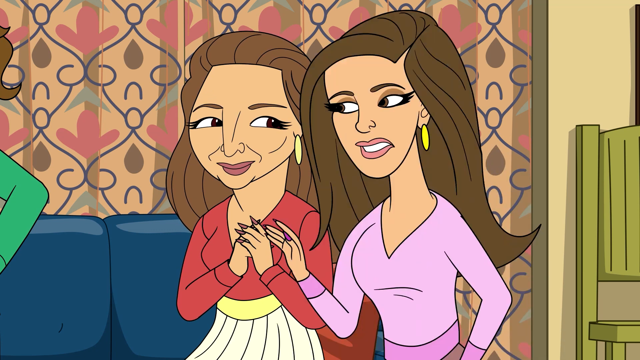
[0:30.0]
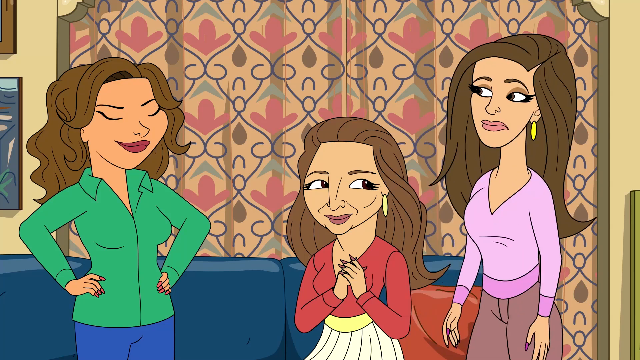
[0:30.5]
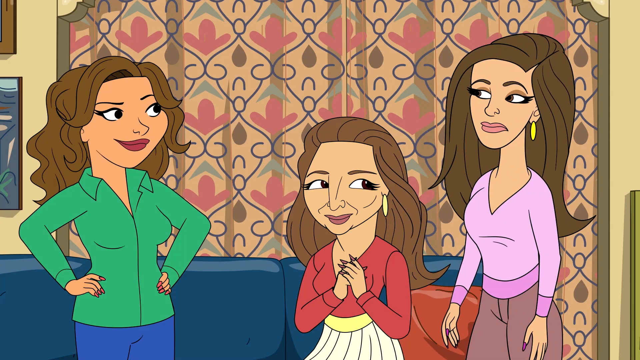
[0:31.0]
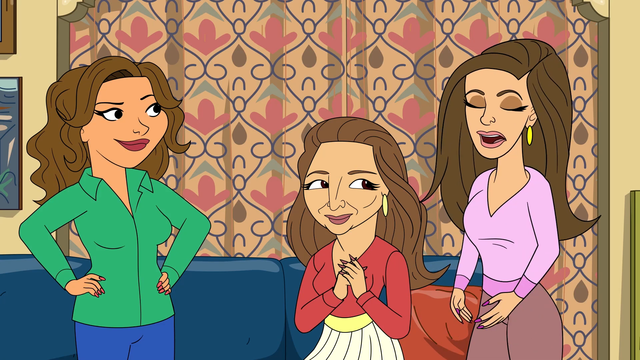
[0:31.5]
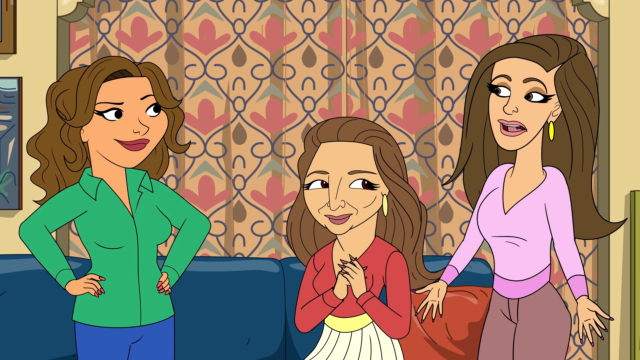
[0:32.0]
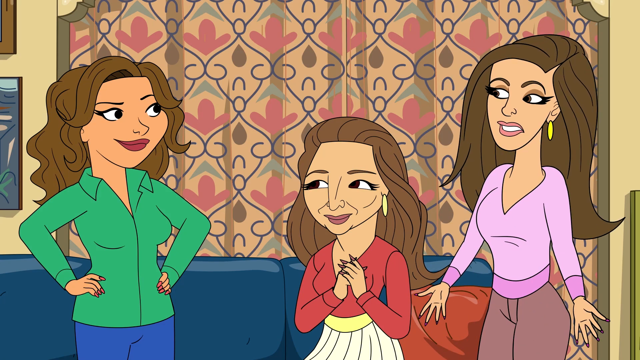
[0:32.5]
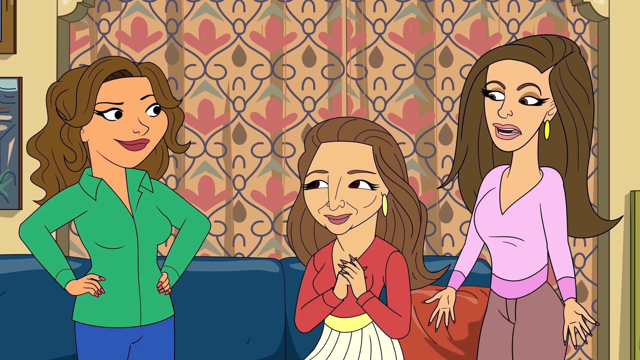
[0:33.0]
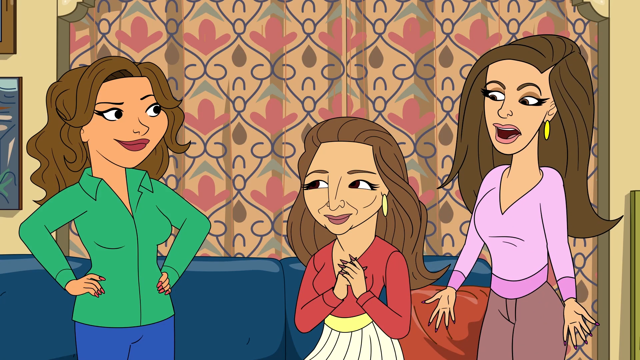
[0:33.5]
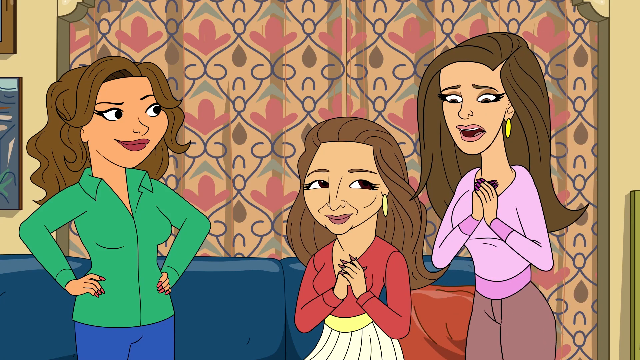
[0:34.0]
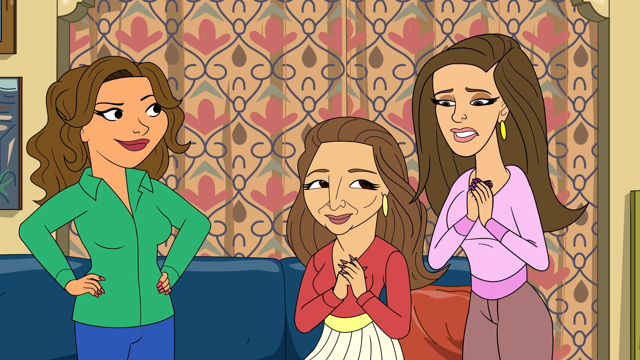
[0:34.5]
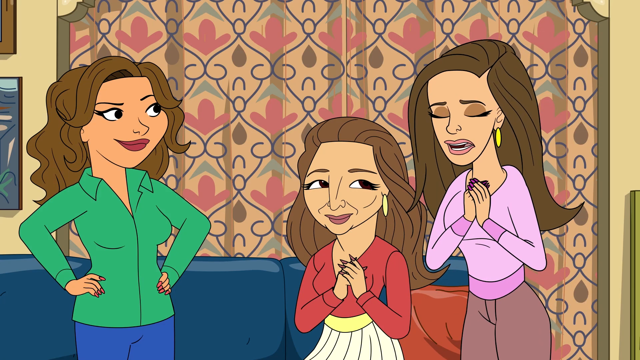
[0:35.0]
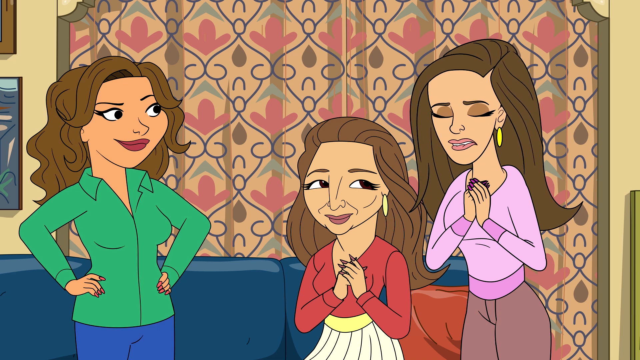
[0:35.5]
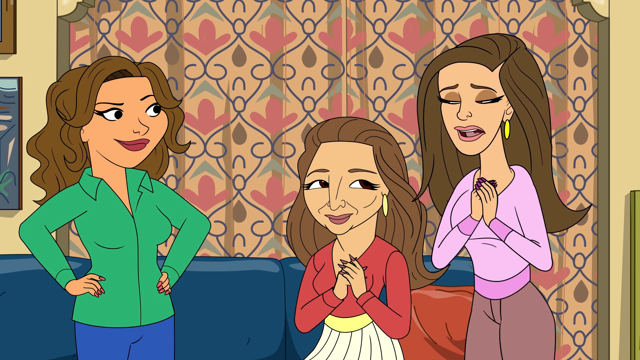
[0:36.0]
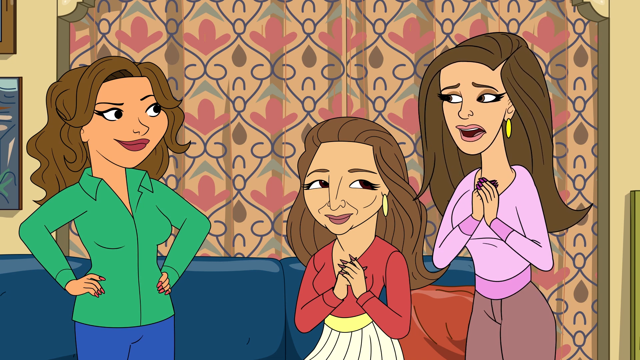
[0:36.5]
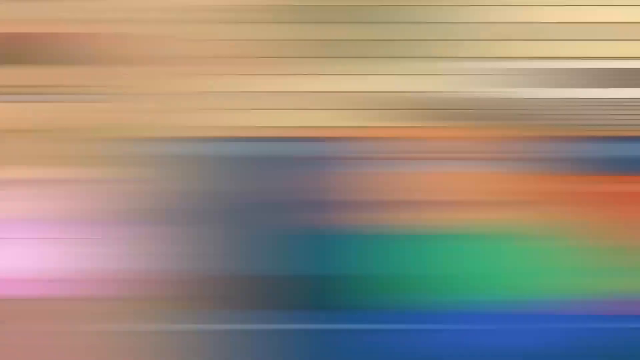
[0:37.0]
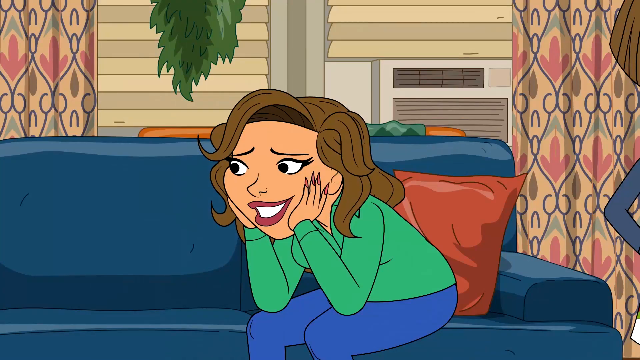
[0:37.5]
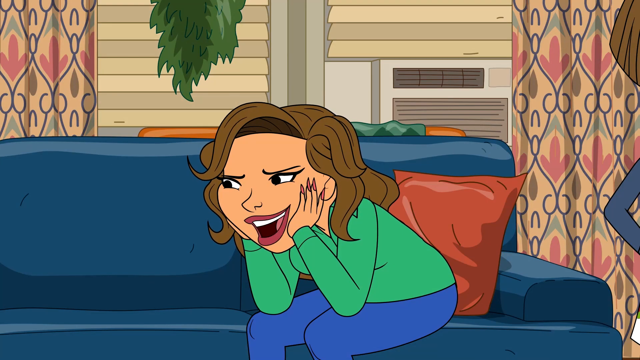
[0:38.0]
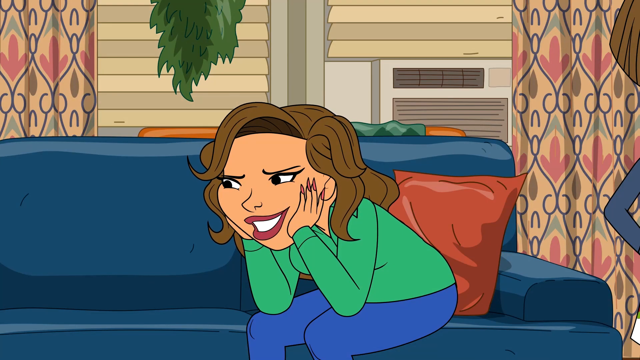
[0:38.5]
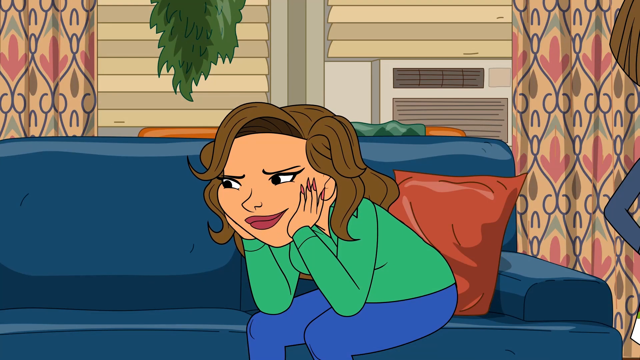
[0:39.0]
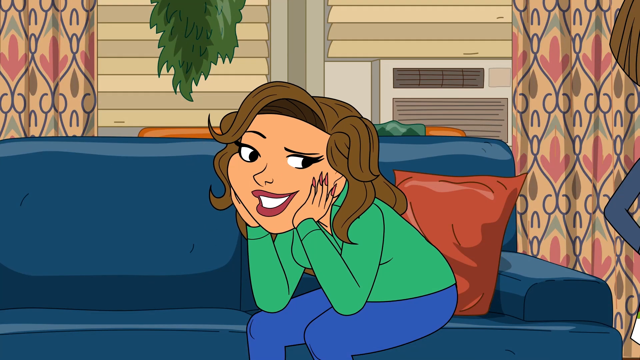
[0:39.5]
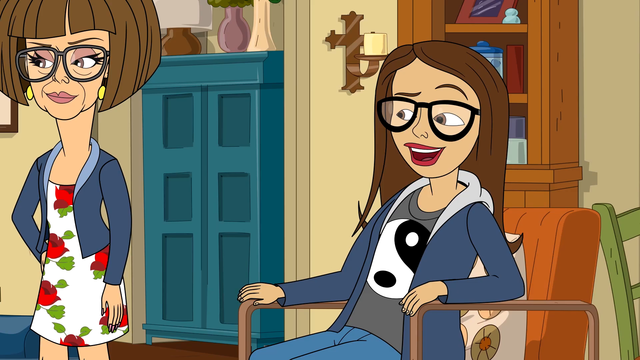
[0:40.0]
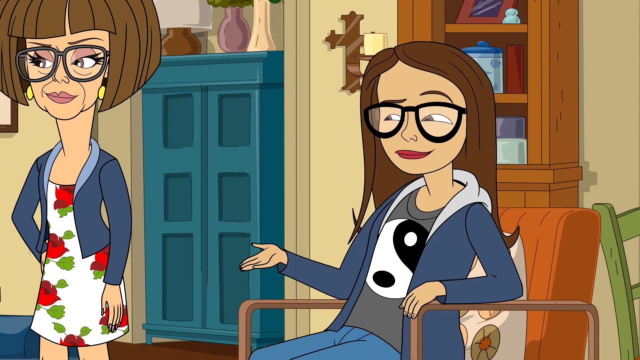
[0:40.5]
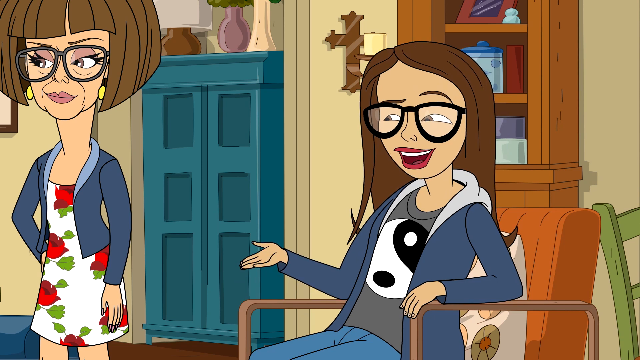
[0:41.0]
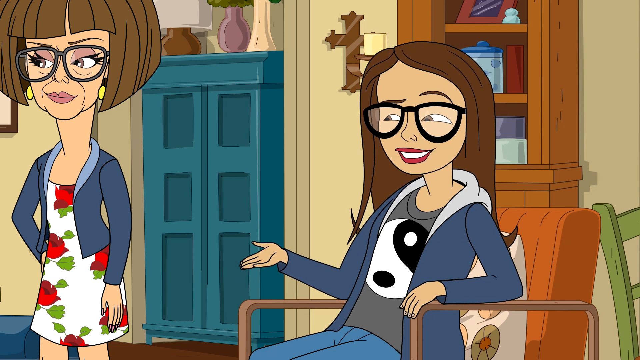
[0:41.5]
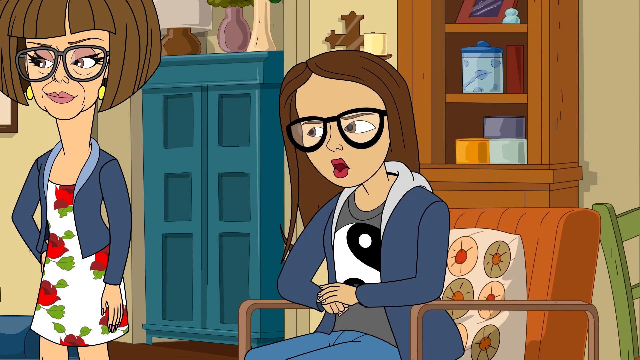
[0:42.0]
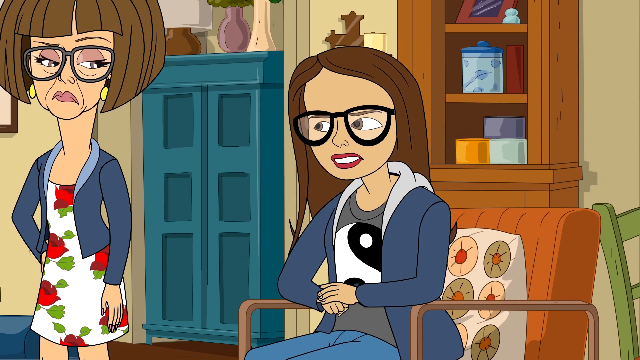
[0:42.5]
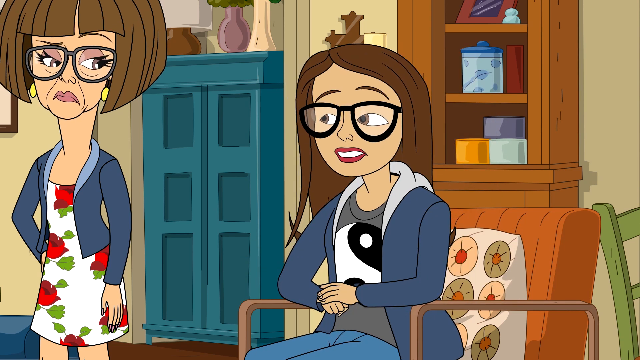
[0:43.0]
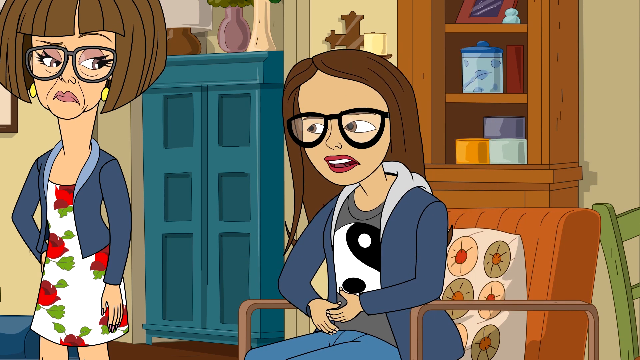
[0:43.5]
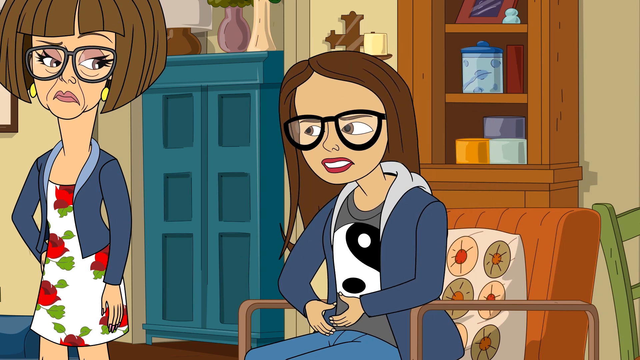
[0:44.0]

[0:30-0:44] Two ladies with long brown hair in different shades of brown are having a conversation. The lady who was sitting on the floor, wearing purple, stands up, puts her hands in a prayer position, and talks. The video moves to a lady sitting on a chair, who doesn't seem to be the same as the one sitting next to the lady in the purple t-shirt. The lady on the chair responds as soon as the video moves to her. The video then moves to the lady in the green top talking, with the one sitting on the chair responding. To the right of the lady on the chair, a lady wearing glasses and a white dress with red roses is standing next to her and not talking. The shots change from the lady in green and blue by the couch talking to the two ladies, one of them on the chair, and then the video moves again to the lady in green talking to two different ladies who are now standing next to her by the blue couch.